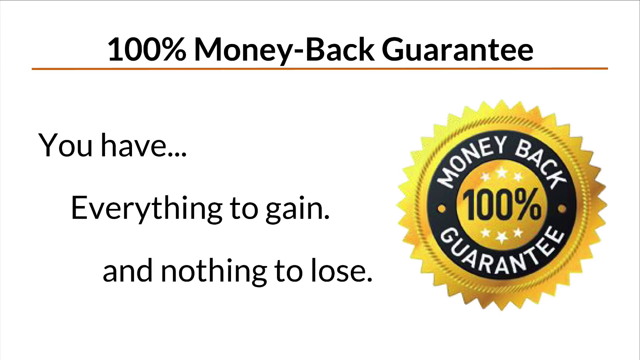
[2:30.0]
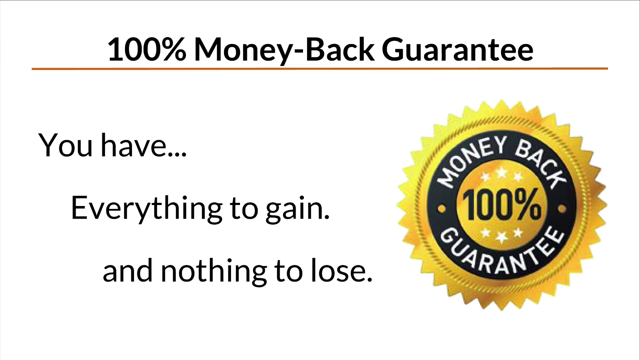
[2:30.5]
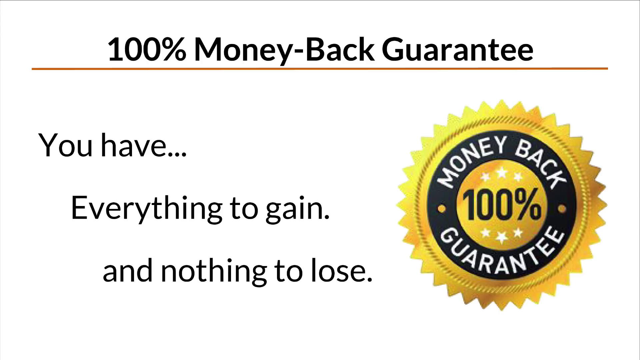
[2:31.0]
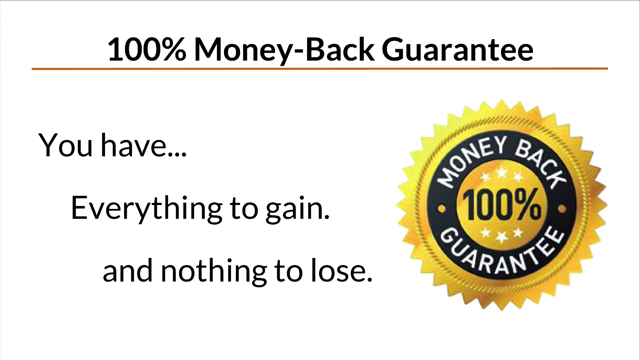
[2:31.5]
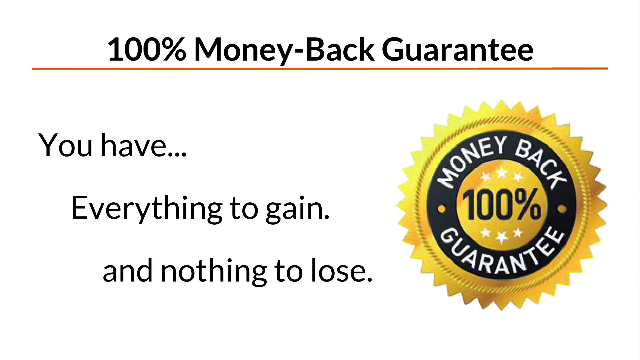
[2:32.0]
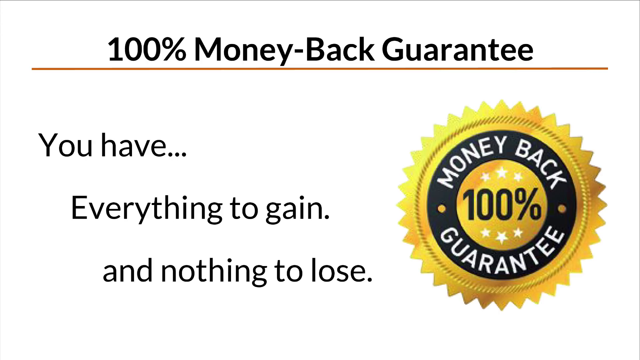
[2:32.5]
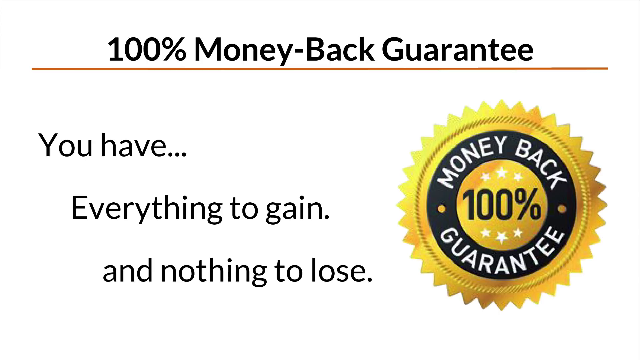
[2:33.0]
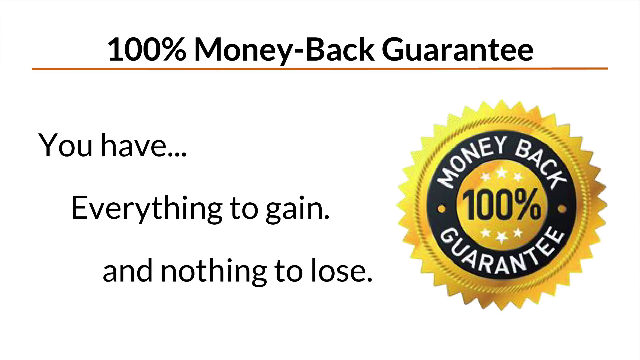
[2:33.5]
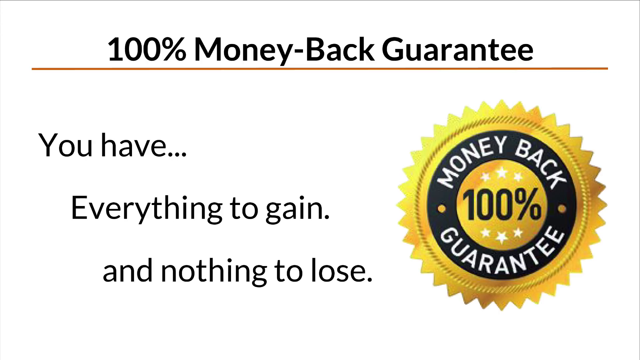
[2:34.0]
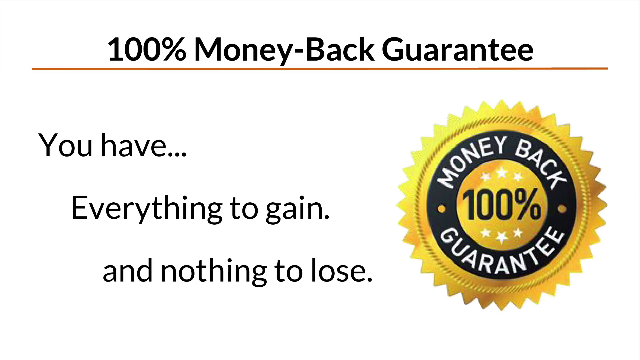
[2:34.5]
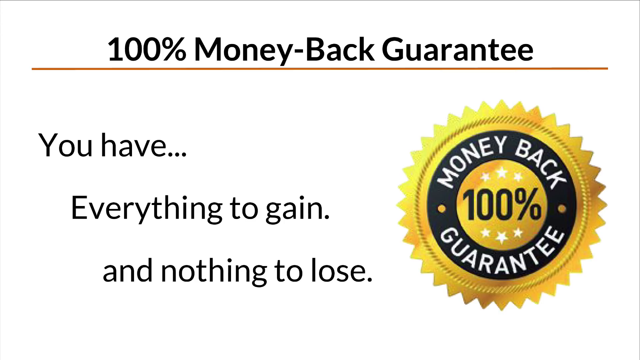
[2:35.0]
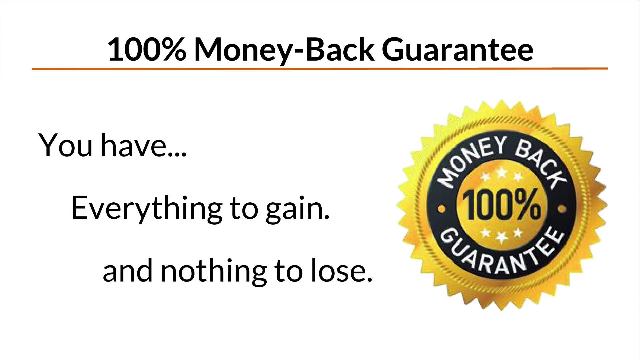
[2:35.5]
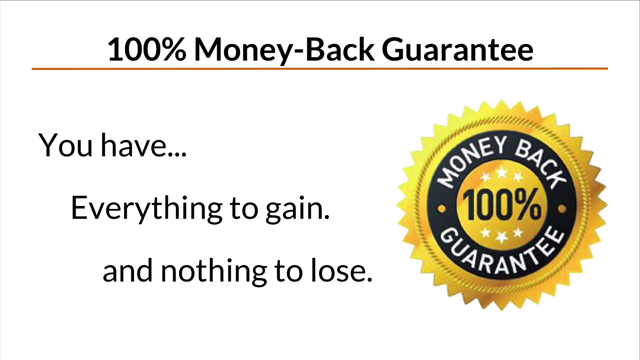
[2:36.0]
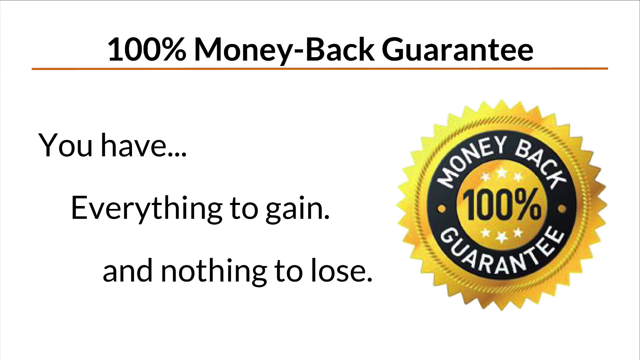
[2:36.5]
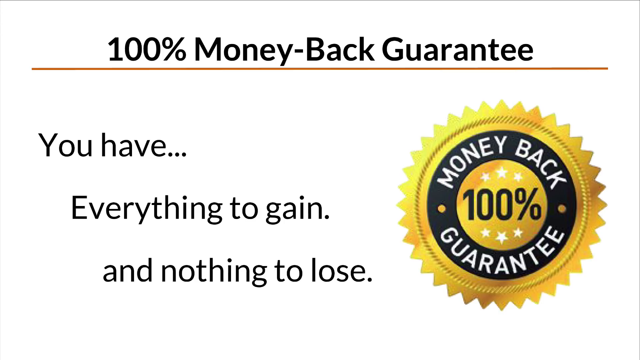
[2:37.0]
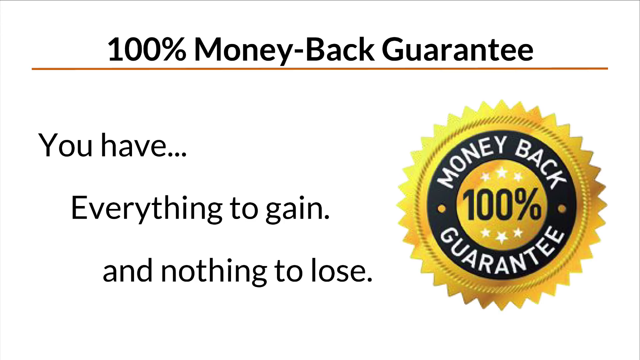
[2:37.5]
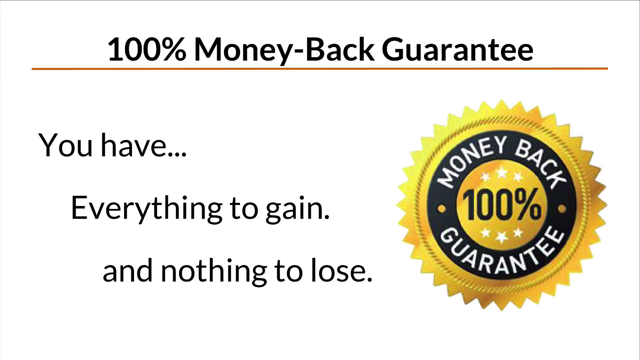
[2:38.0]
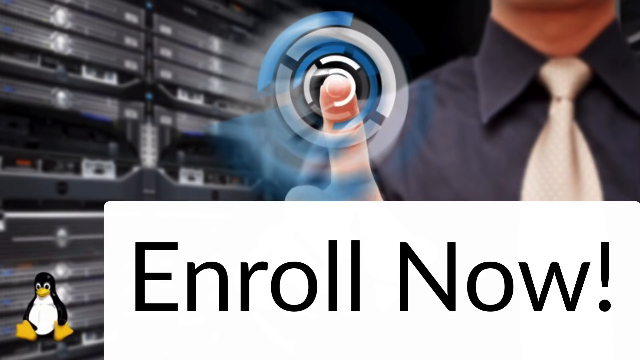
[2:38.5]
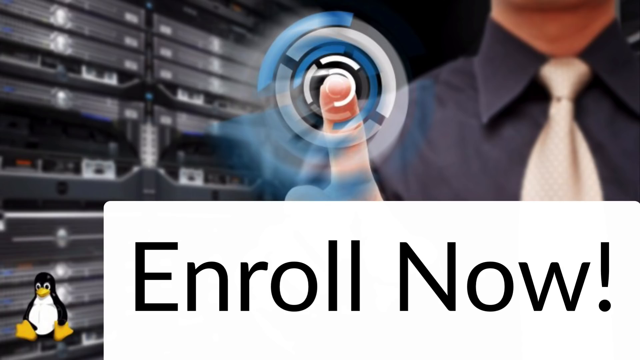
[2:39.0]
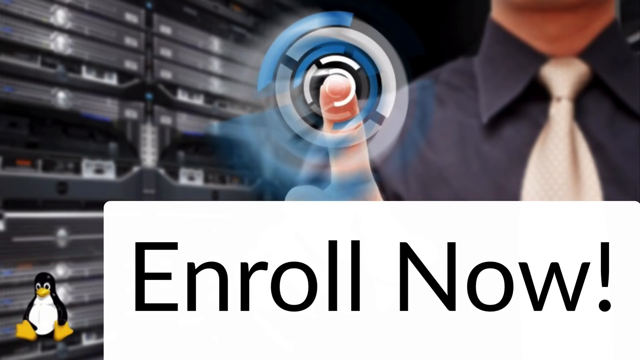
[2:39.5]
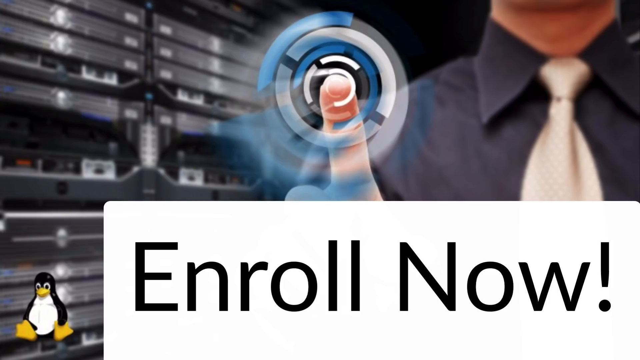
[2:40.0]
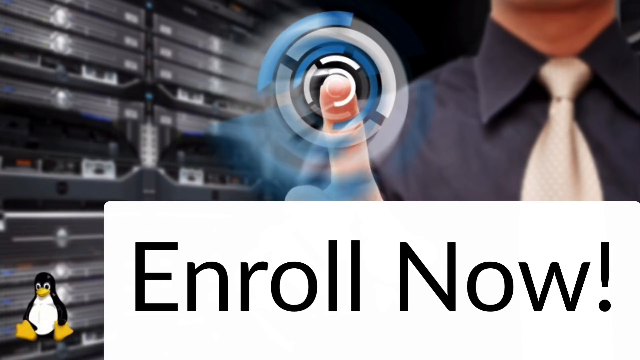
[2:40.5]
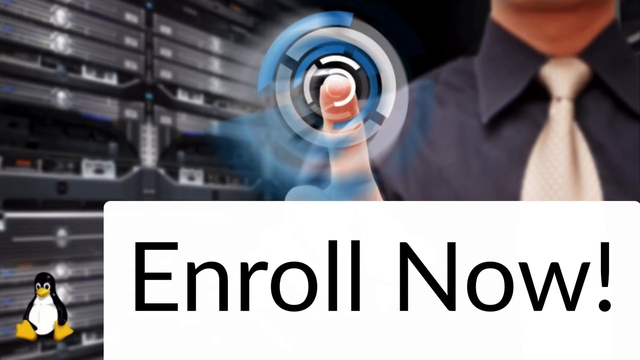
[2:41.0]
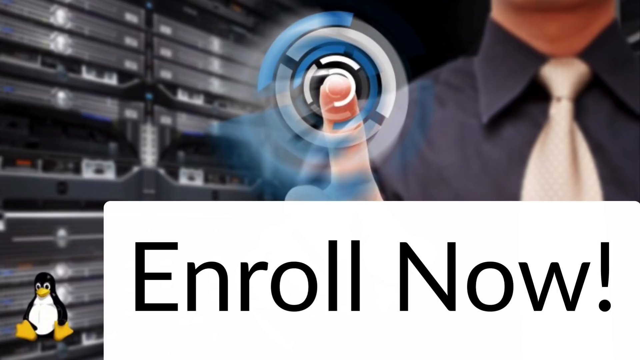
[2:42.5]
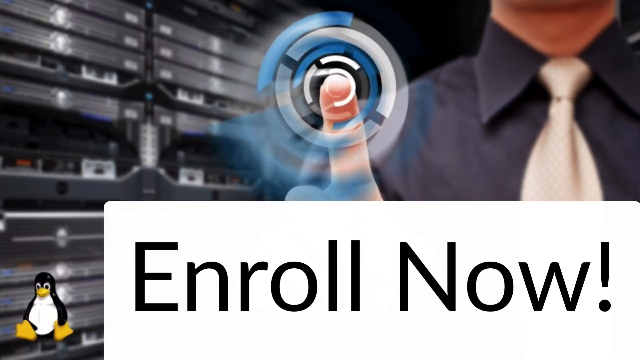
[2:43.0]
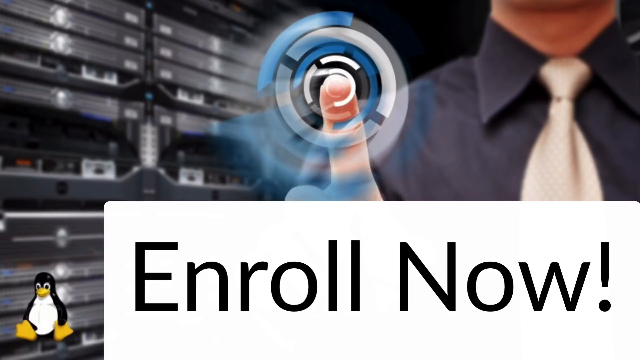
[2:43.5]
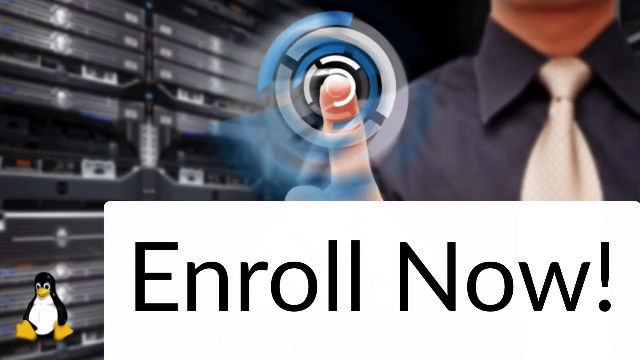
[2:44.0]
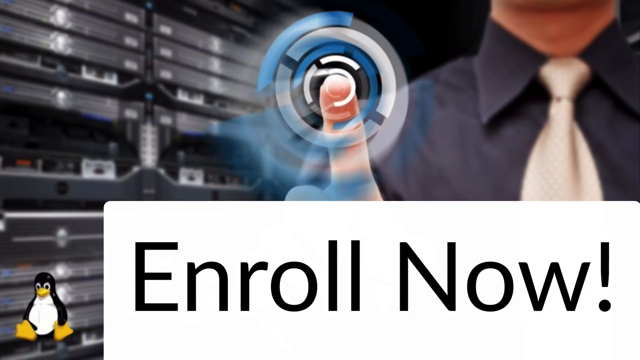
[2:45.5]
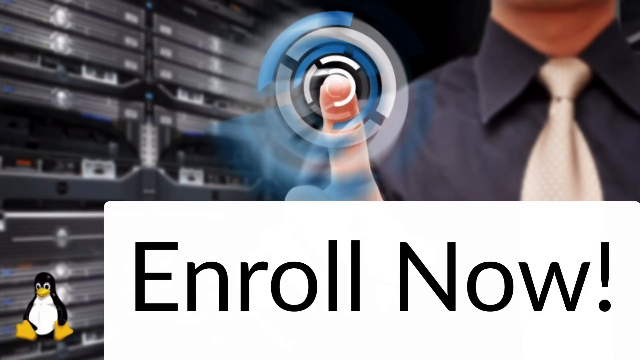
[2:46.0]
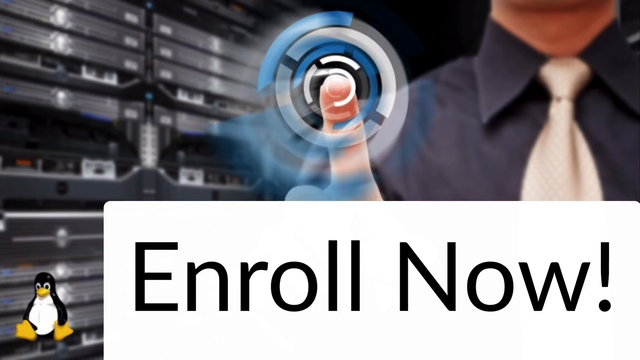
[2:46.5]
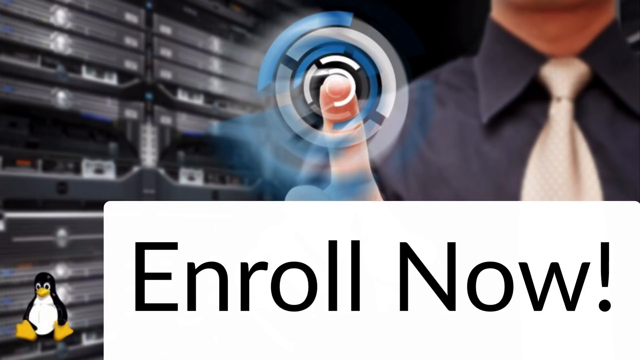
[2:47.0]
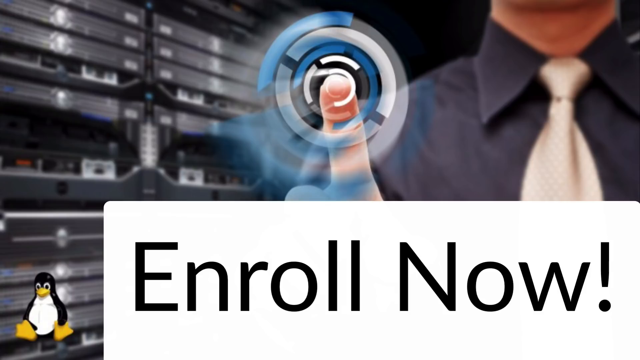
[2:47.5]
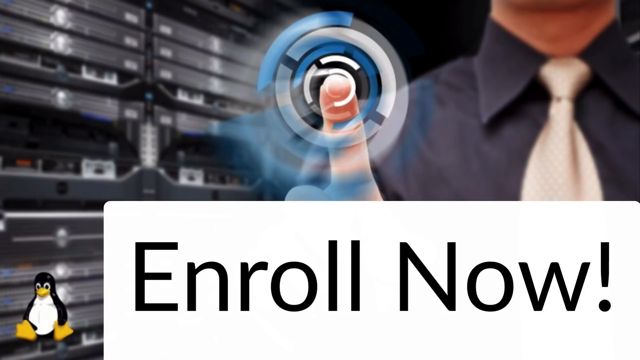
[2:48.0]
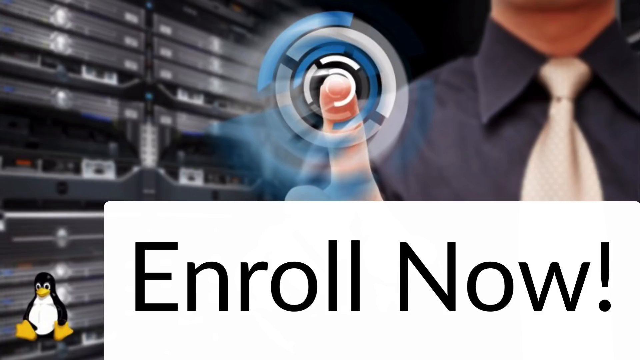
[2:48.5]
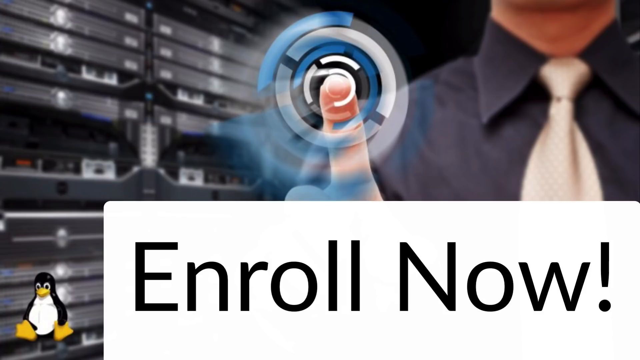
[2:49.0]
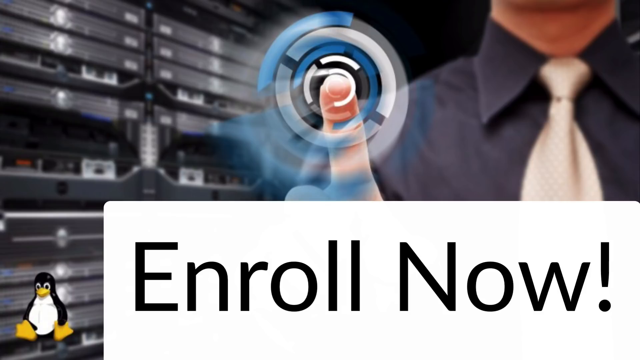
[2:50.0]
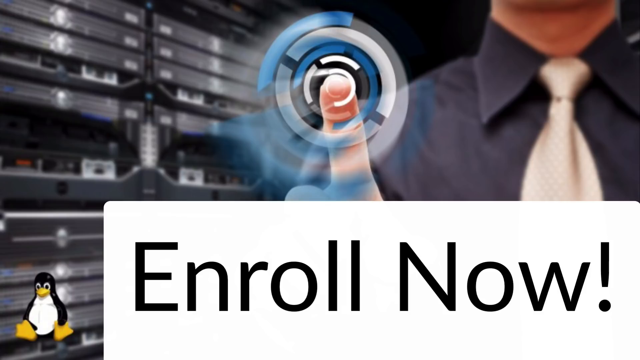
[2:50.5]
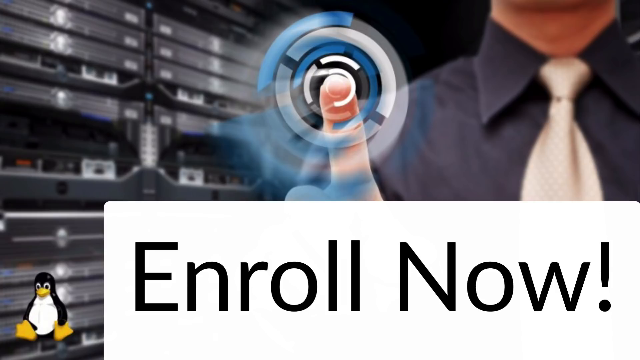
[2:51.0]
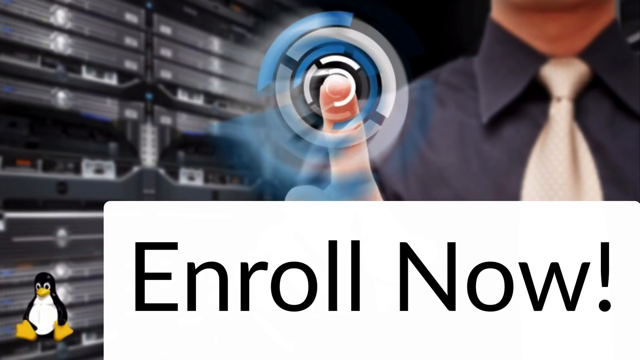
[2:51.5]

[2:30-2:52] Text refers to a "100%" guarantee and says that you get everything you need and nothing more. A black and gold certificate shows the "100%" guarantee.